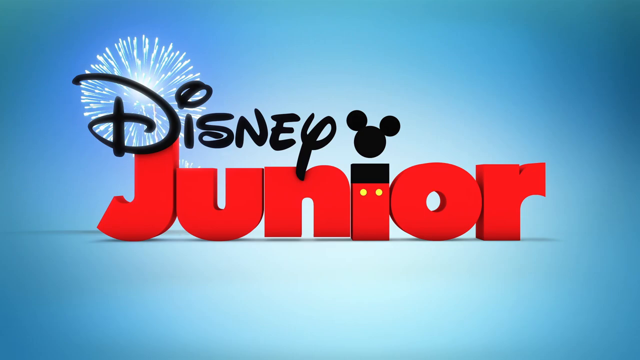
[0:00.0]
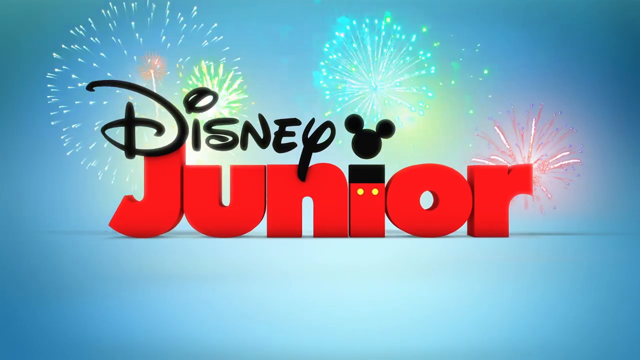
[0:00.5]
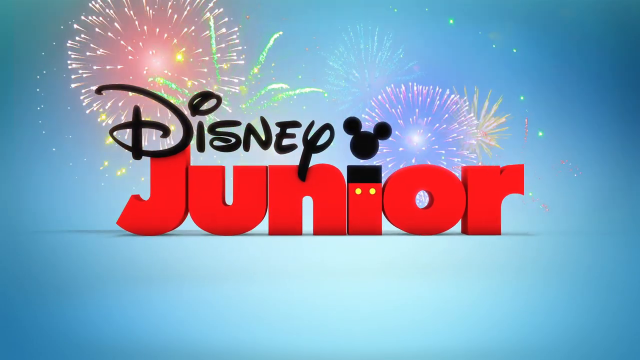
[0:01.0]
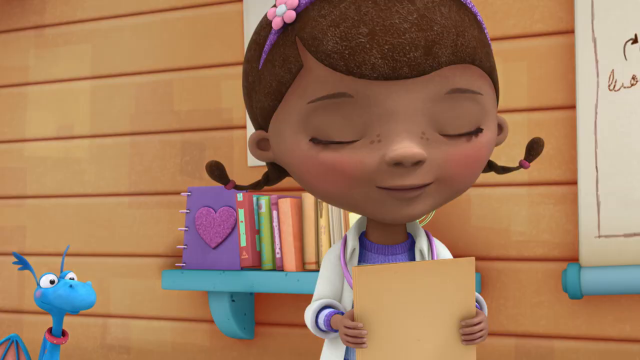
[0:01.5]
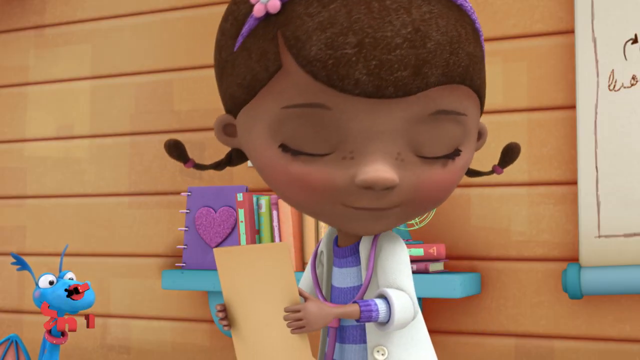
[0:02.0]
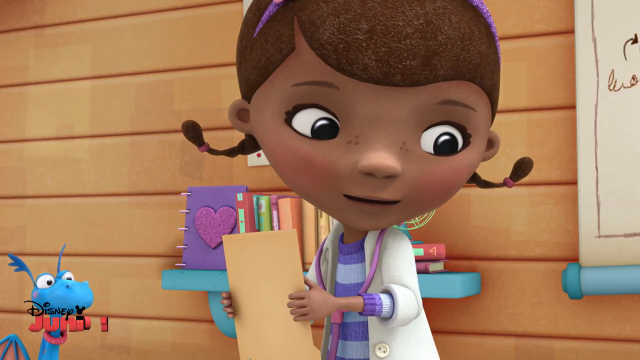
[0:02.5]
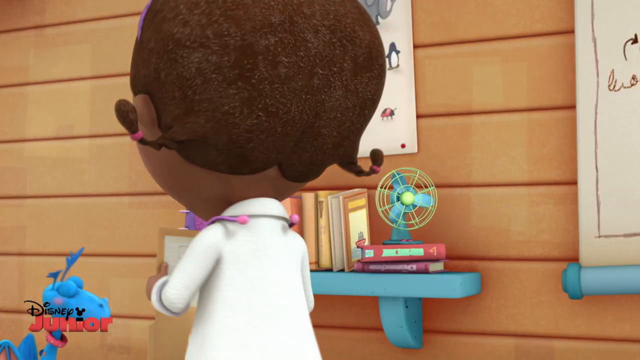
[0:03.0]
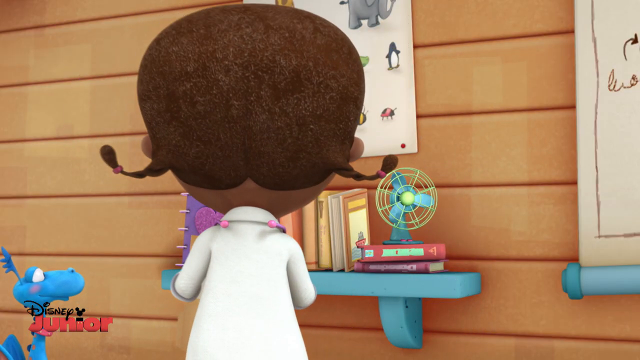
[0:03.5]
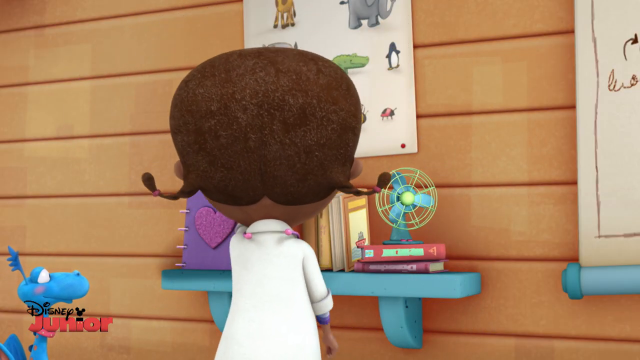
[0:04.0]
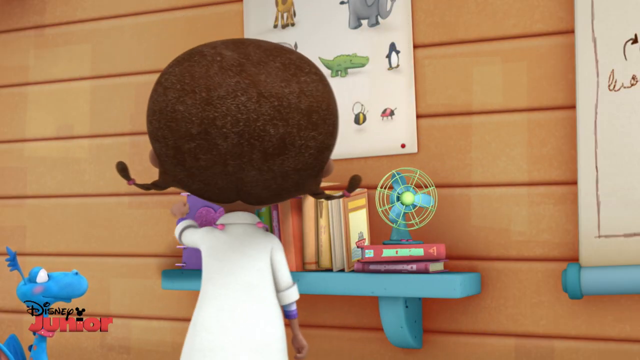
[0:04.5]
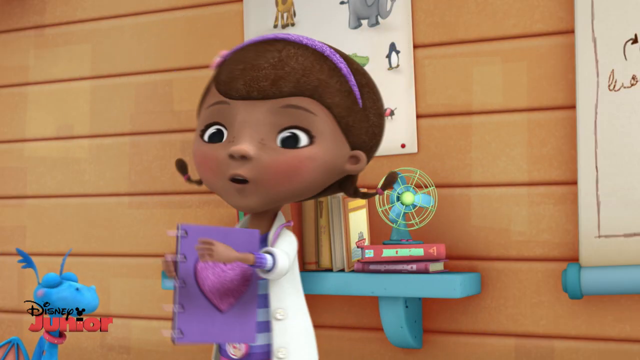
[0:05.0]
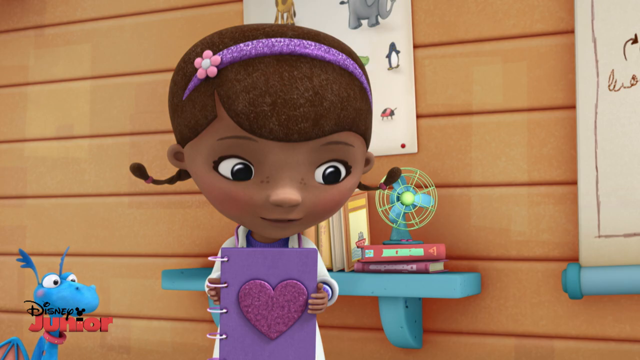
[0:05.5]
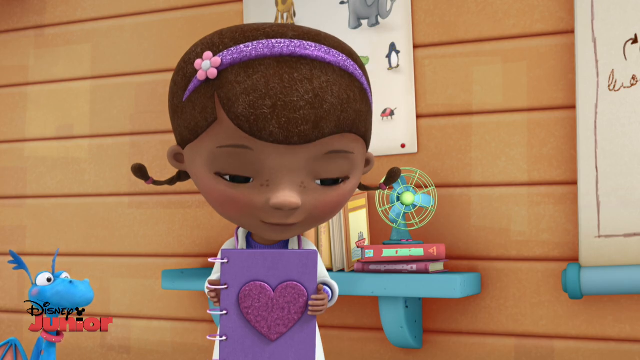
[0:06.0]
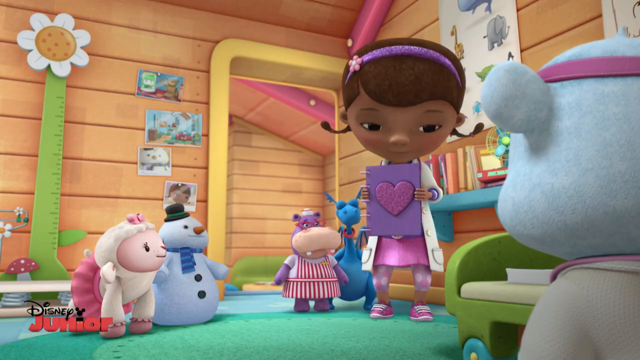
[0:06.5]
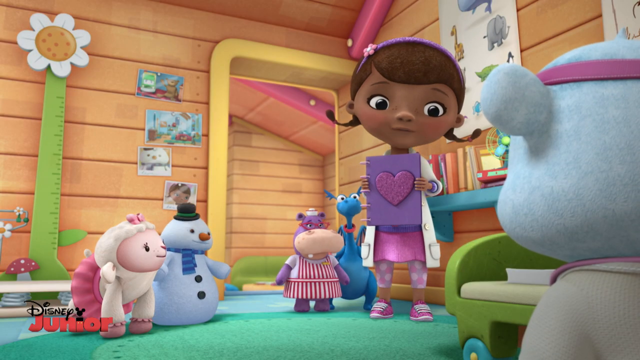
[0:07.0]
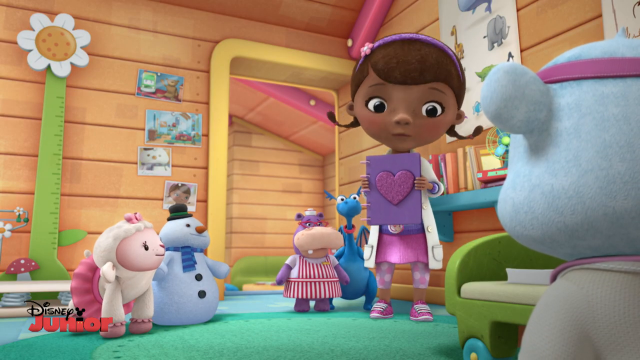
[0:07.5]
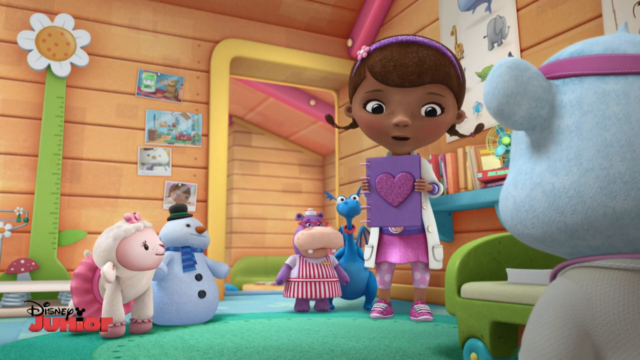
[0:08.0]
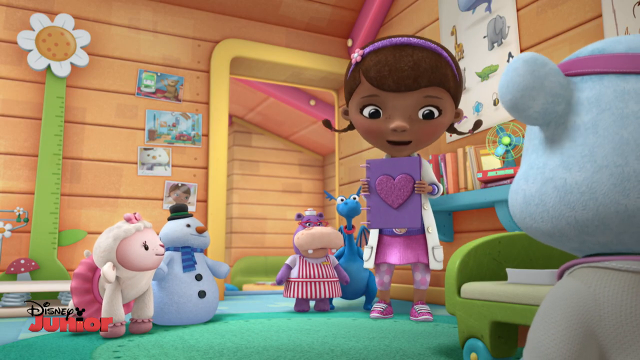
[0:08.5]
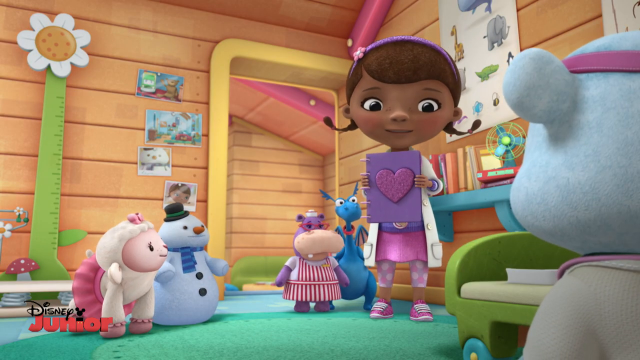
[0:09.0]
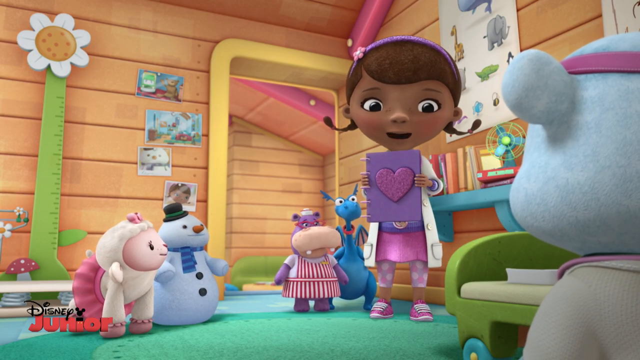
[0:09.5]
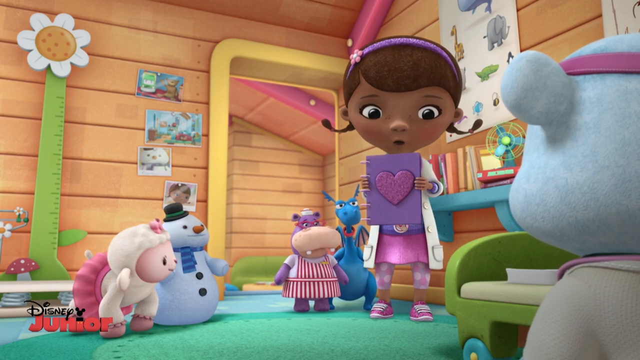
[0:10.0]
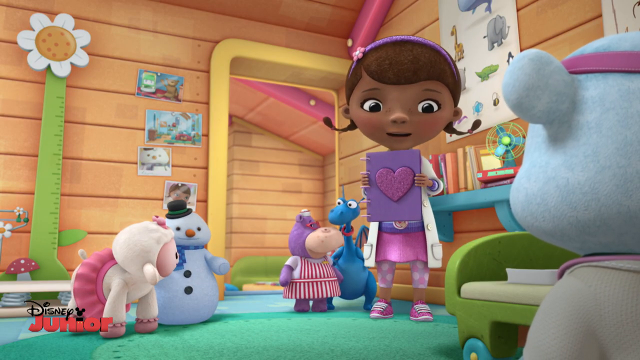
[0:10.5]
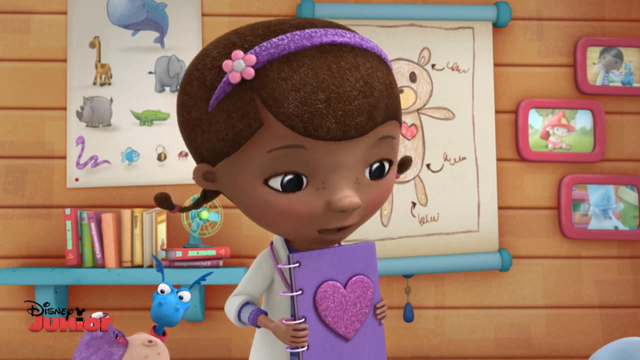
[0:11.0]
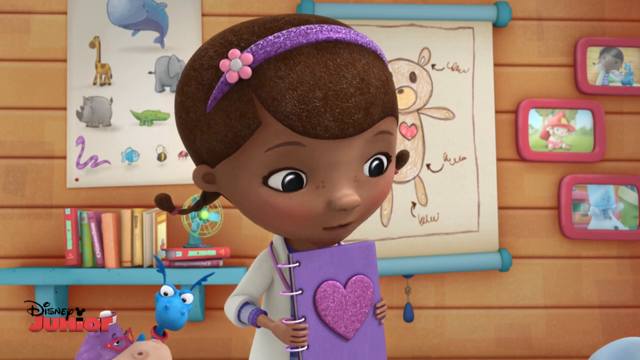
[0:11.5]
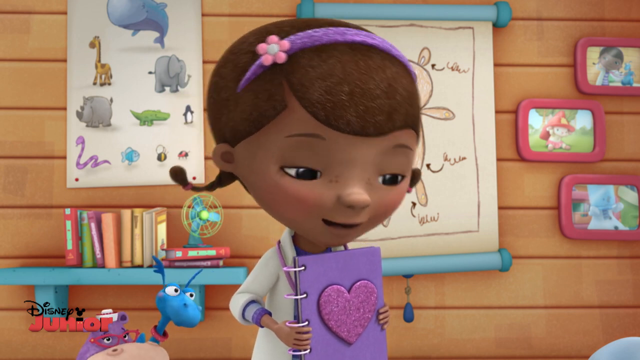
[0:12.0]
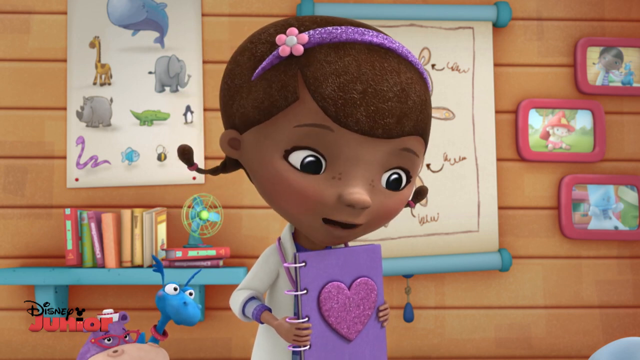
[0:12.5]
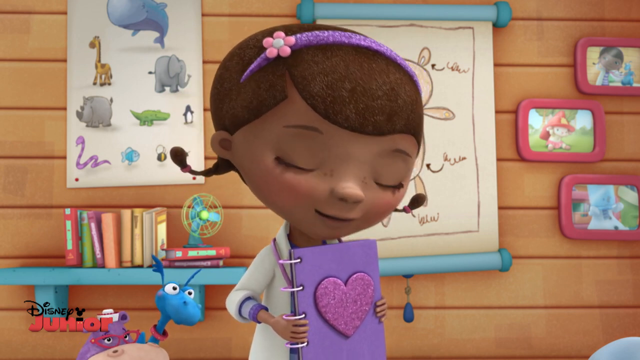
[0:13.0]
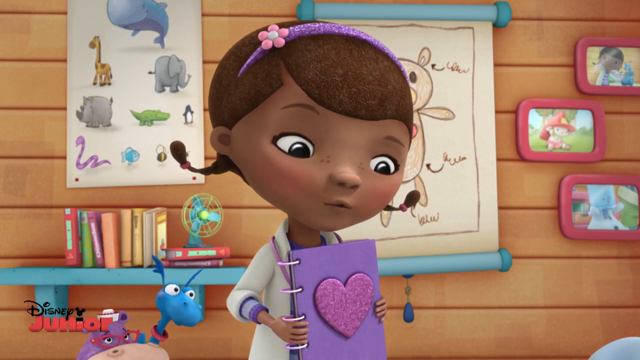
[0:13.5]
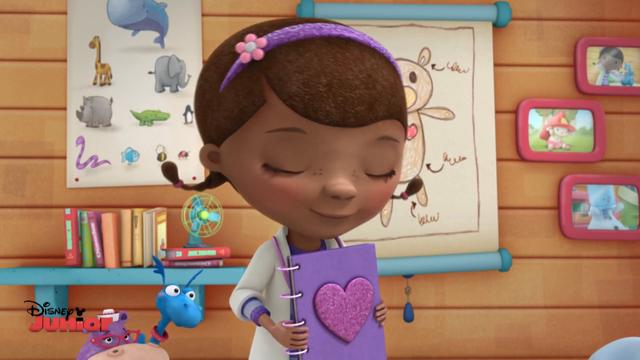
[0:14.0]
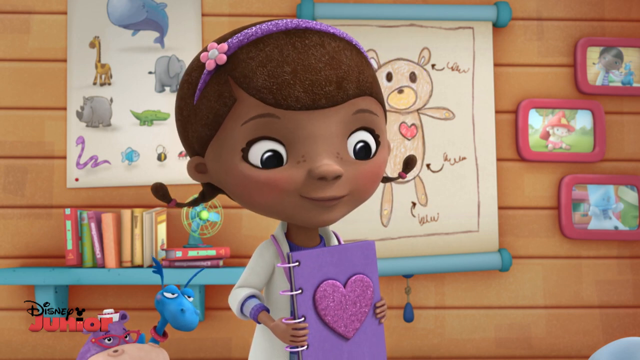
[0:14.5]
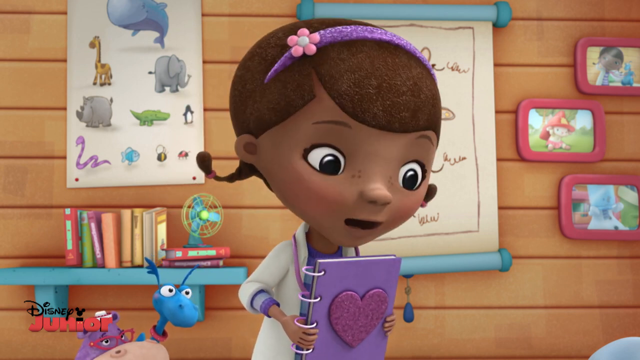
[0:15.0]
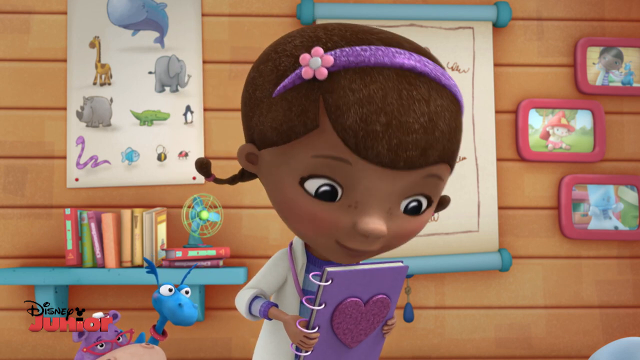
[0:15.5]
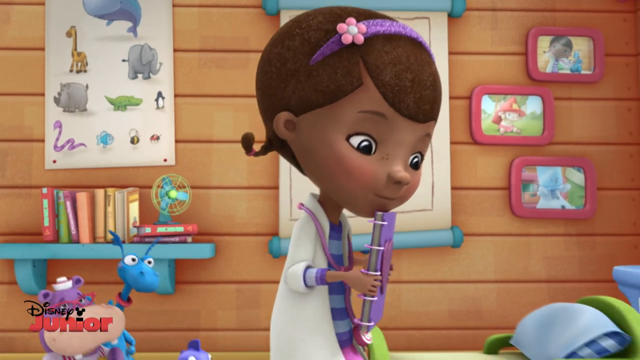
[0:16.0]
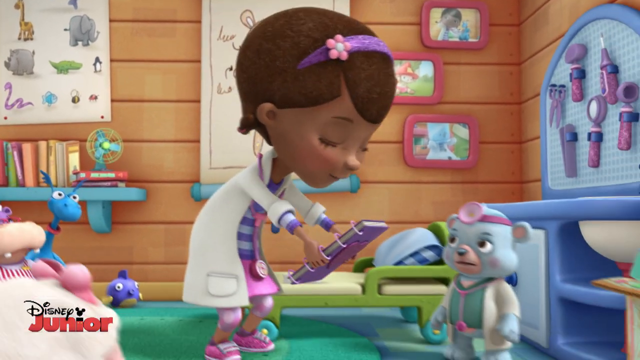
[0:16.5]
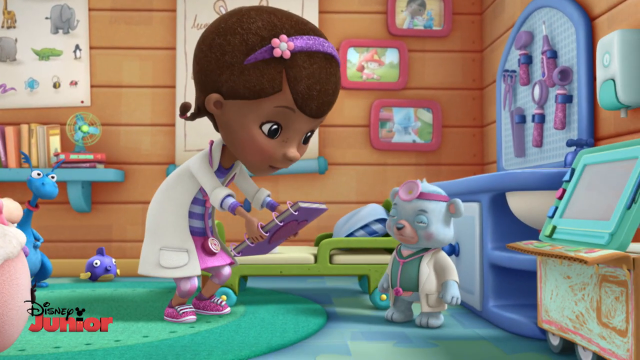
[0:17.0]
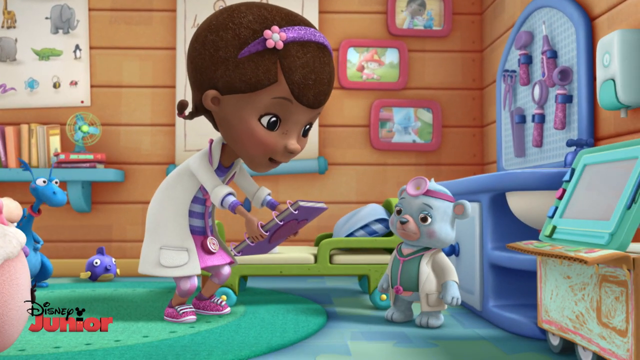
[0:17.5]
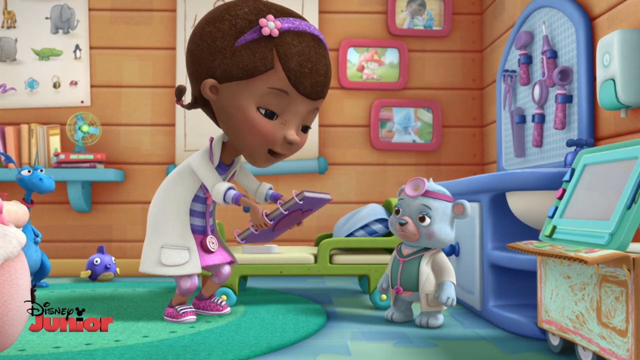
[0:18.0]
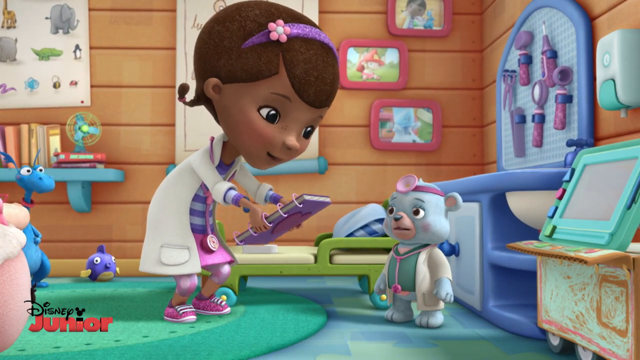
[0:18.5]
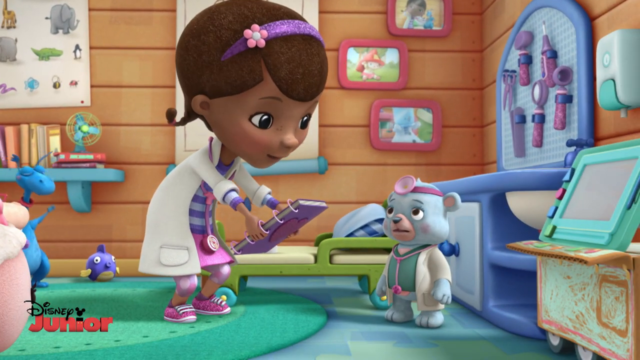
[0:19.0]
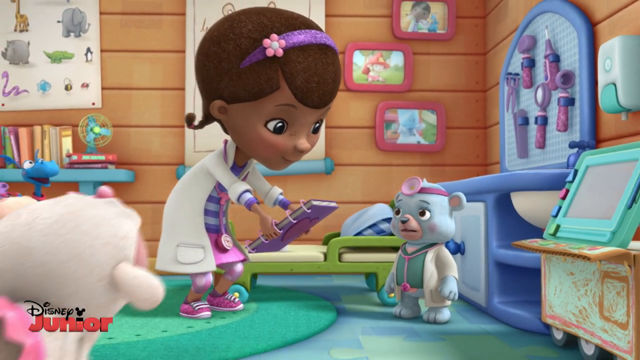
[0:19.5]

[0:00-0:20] A blue background with a white shadow in the center shows the Disney logo; behind the D there appear to be firecrackers exploding. Then the word "junior" appears in big red block letters, and the I is actually the shape of Mickey Mouse's ears, with two yellow dots. Fireworks explode in the back. The scene cuts to a close-up of a little black girl with a very big head and tiny ponytails, her eyes closed as she reads a piece of paper. She opens her eyes, turns, and places the paper down on the bookshelf, while a blue creature like a mini dragon watches her from the left. She grabs a notebook with a purple heart on it, turns around, and talks to a group of characters in the room. She puts her head down and looks up, nodding her head as she blinks as if making a point, and tilts her head left to right as she talks. Her eyes go wide, then her head tilts back with her eyes semi-closed, and she leans forward with her eyes open. She tilts her head a bit as she talks, then steps forward, leans over, and holds out the book to a mouse dressed as a doctor. He tilts his head as she speaks.